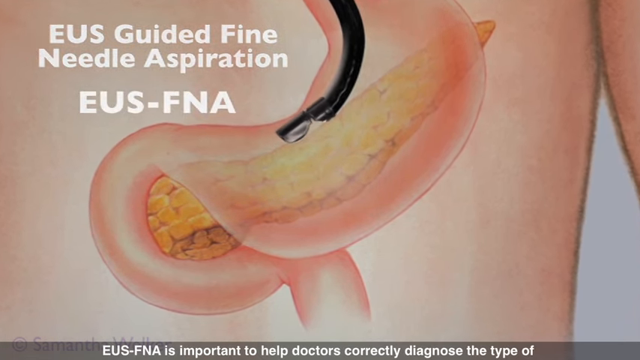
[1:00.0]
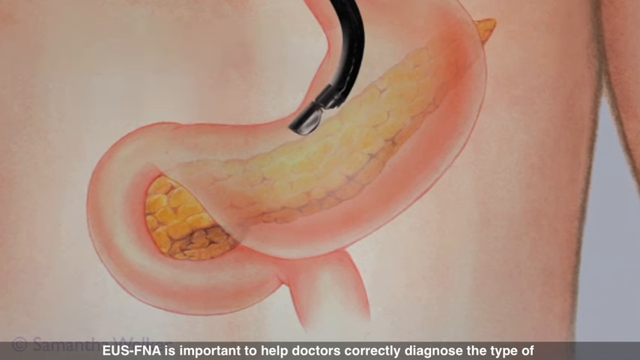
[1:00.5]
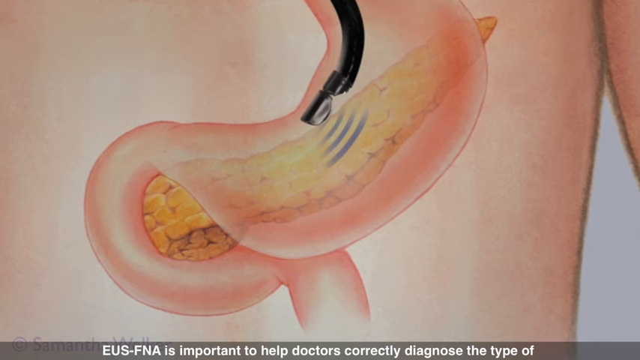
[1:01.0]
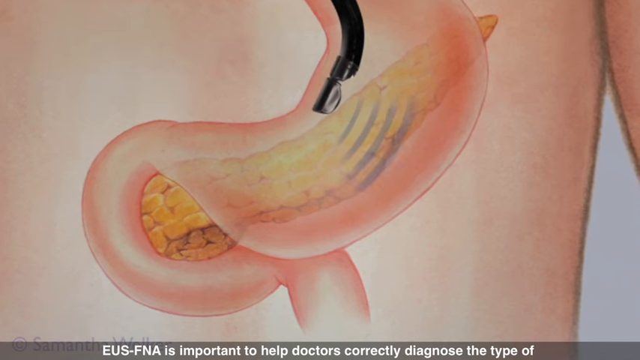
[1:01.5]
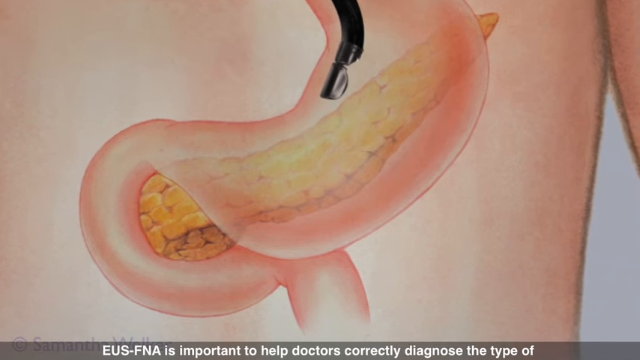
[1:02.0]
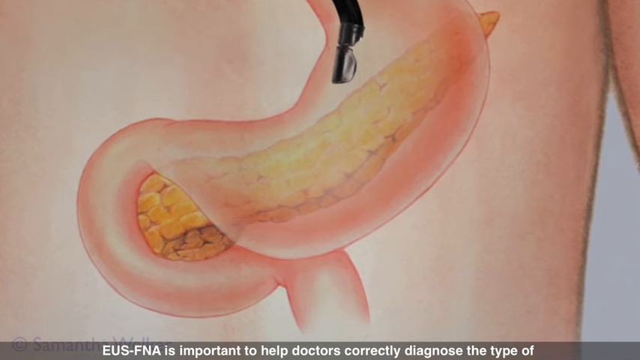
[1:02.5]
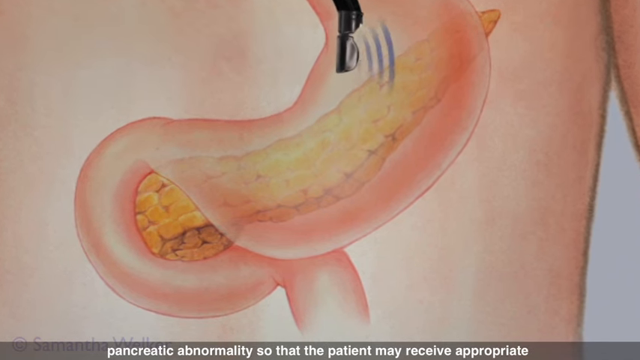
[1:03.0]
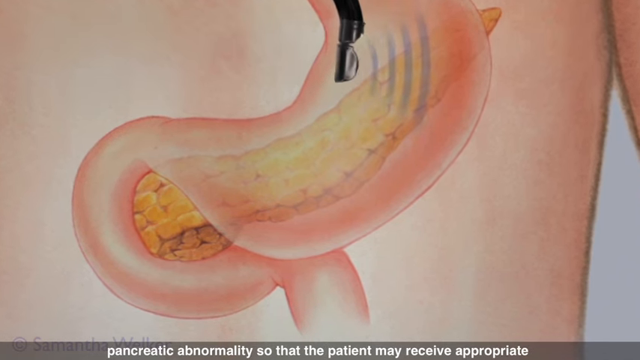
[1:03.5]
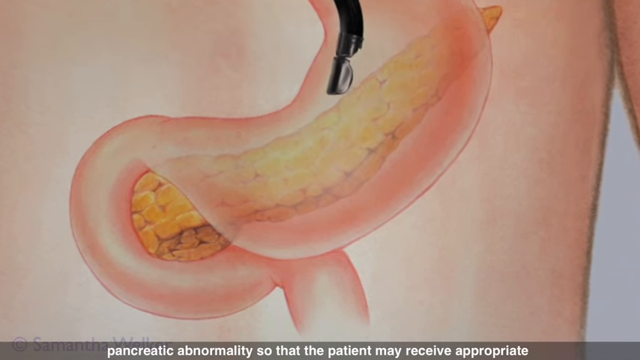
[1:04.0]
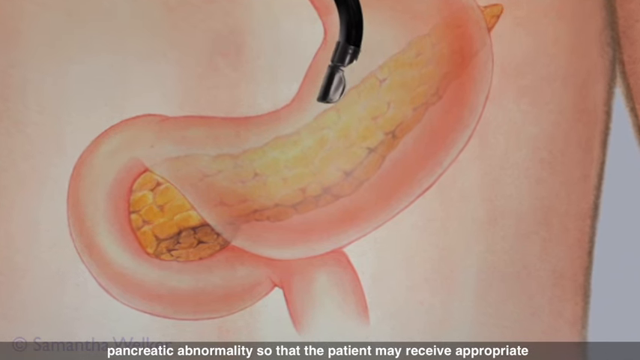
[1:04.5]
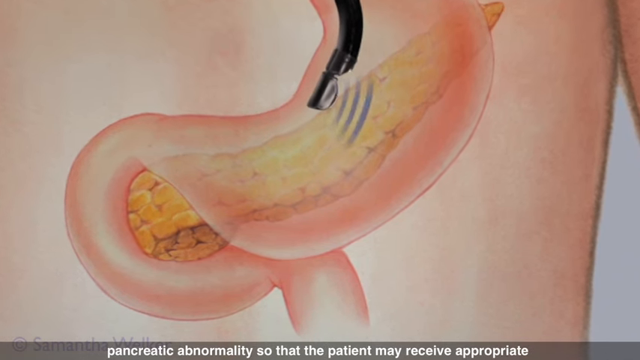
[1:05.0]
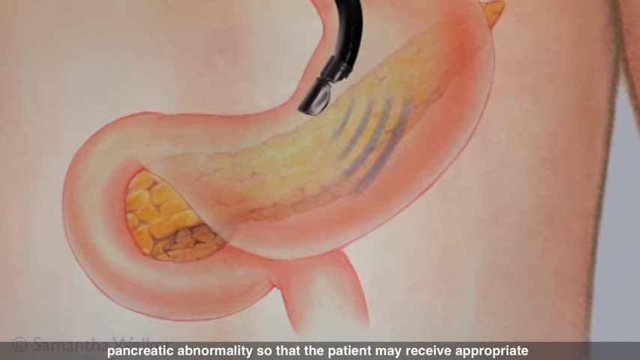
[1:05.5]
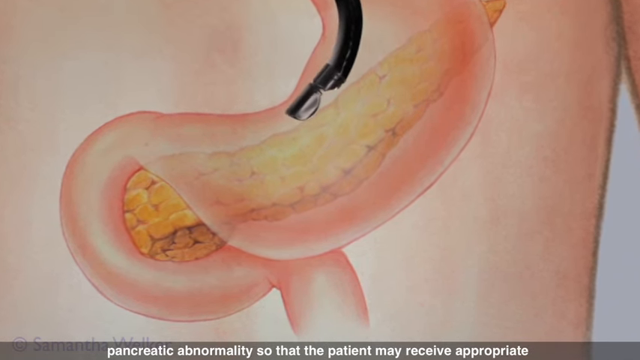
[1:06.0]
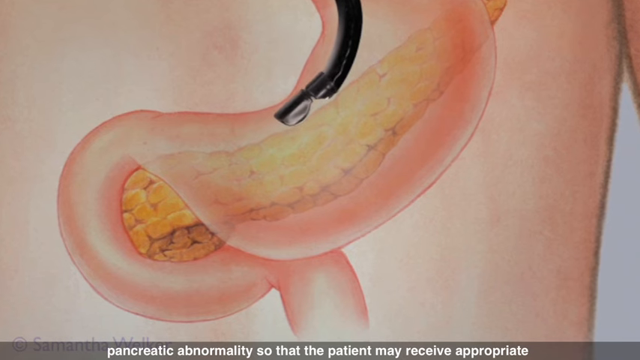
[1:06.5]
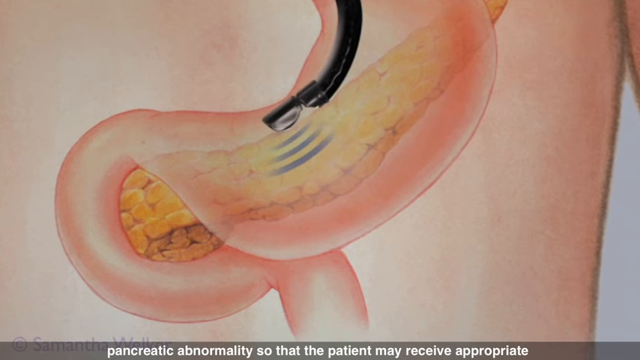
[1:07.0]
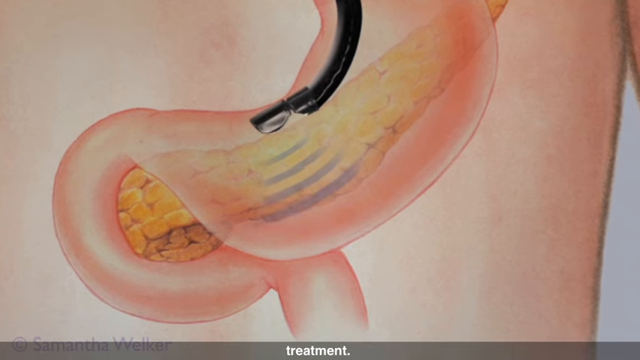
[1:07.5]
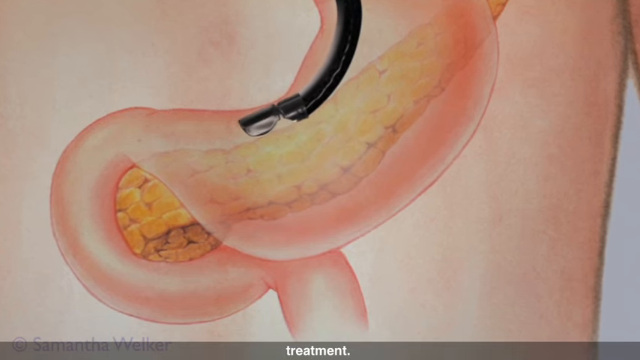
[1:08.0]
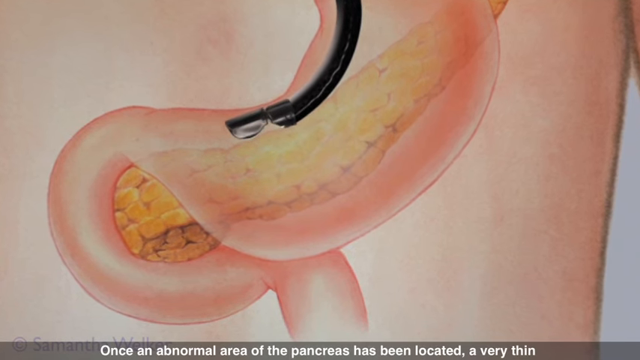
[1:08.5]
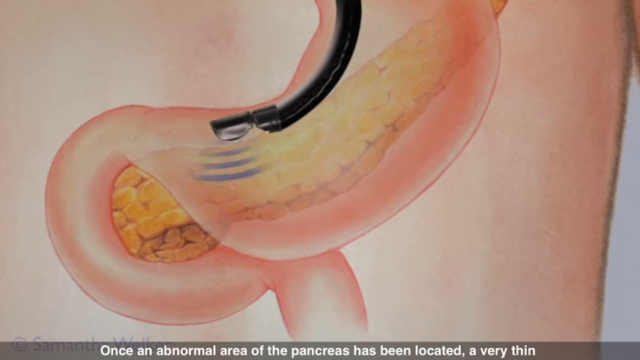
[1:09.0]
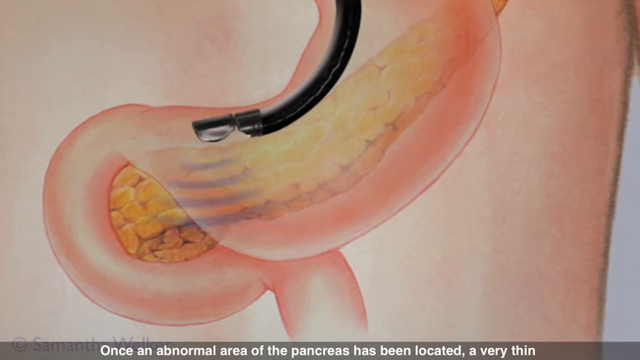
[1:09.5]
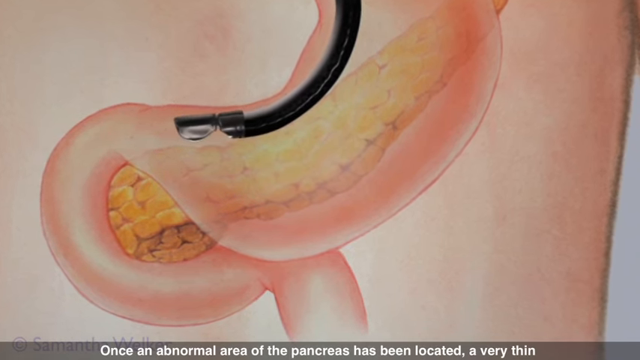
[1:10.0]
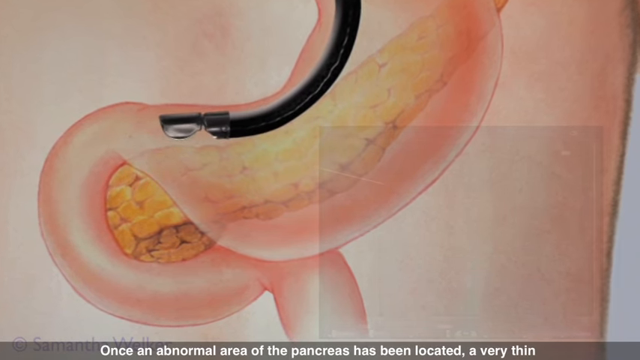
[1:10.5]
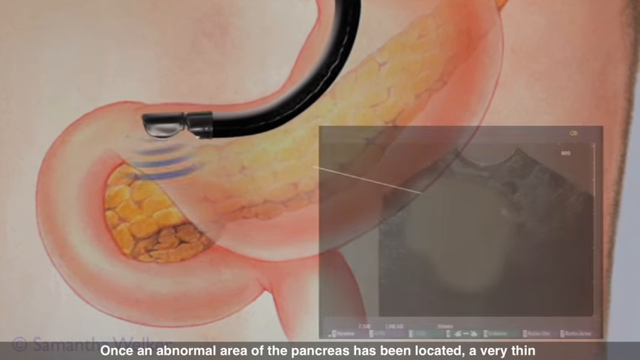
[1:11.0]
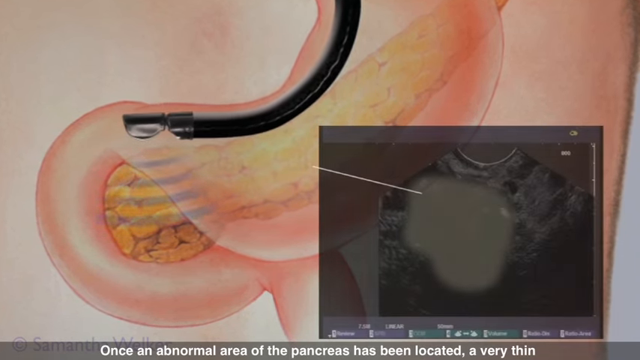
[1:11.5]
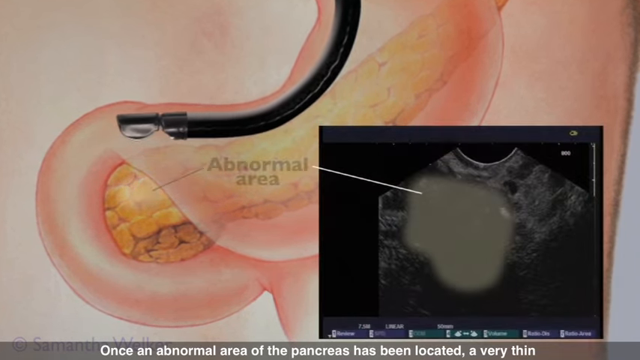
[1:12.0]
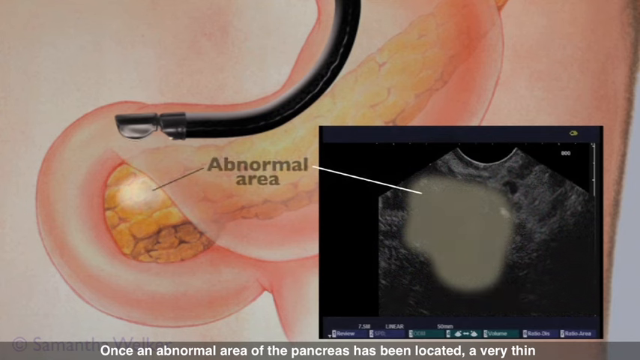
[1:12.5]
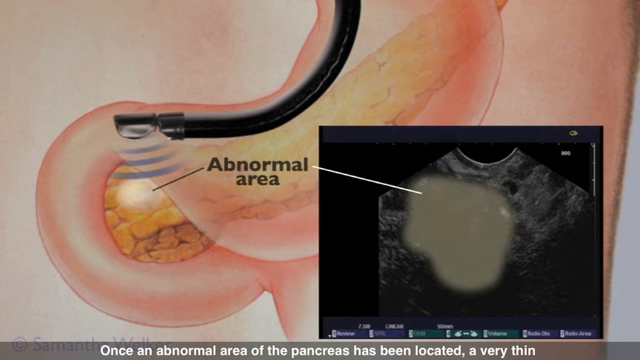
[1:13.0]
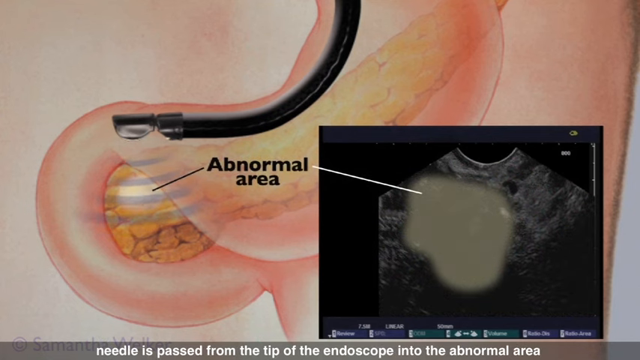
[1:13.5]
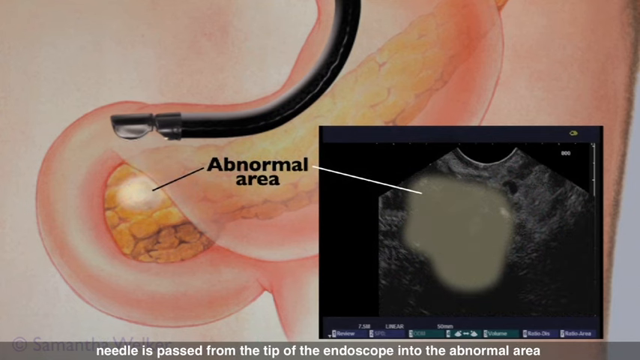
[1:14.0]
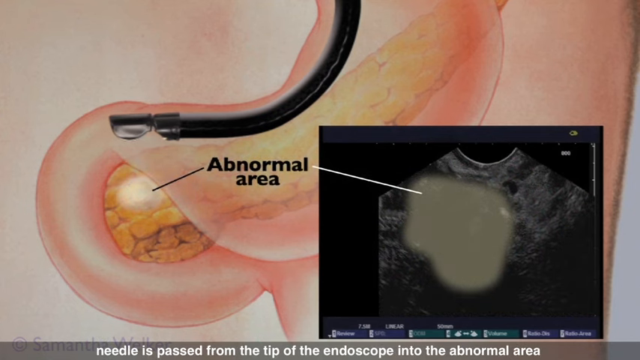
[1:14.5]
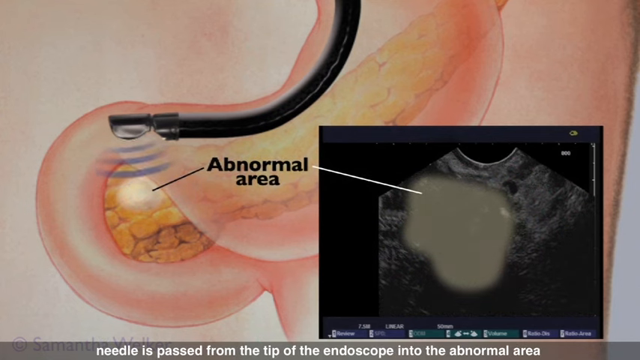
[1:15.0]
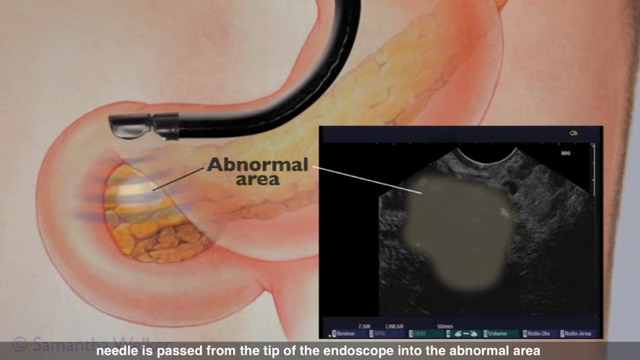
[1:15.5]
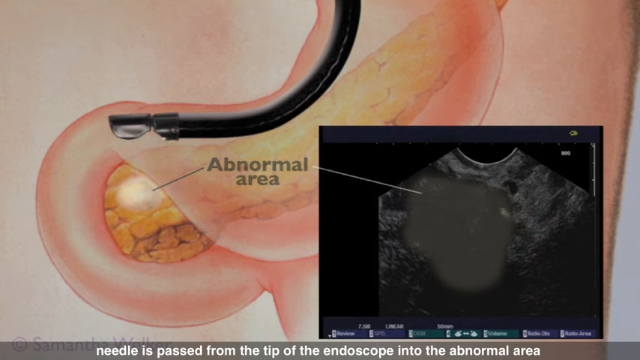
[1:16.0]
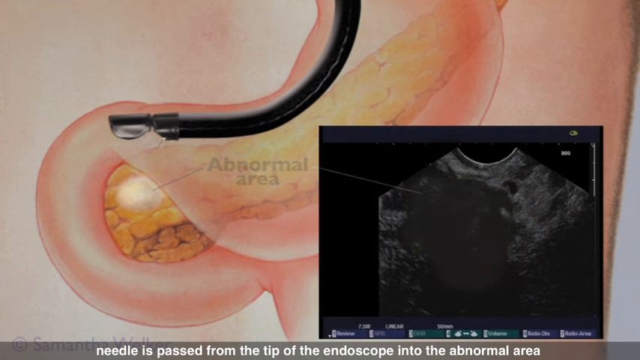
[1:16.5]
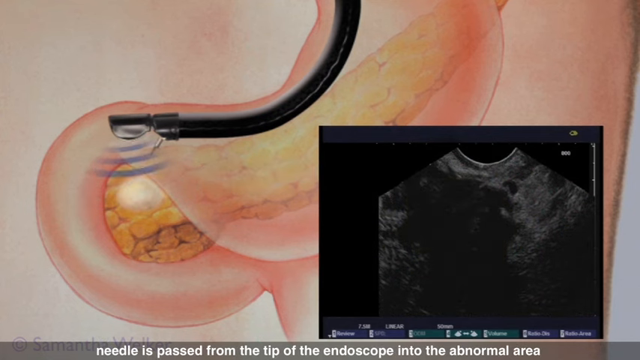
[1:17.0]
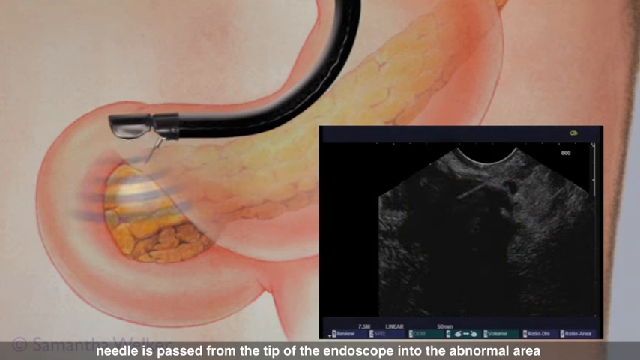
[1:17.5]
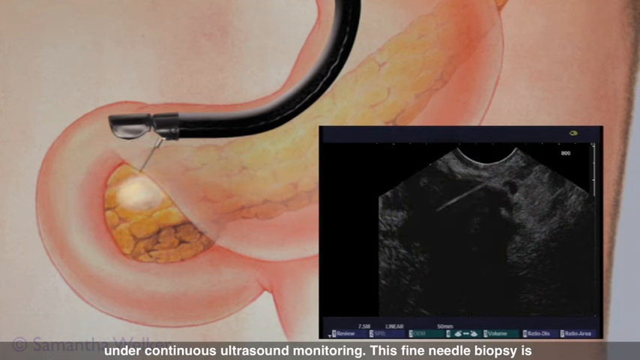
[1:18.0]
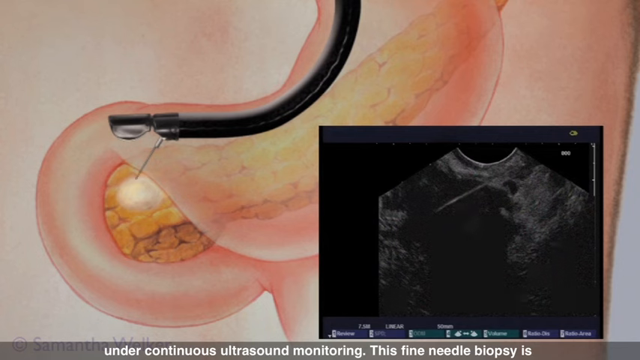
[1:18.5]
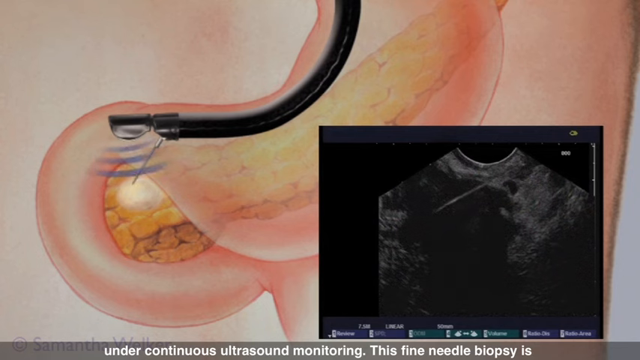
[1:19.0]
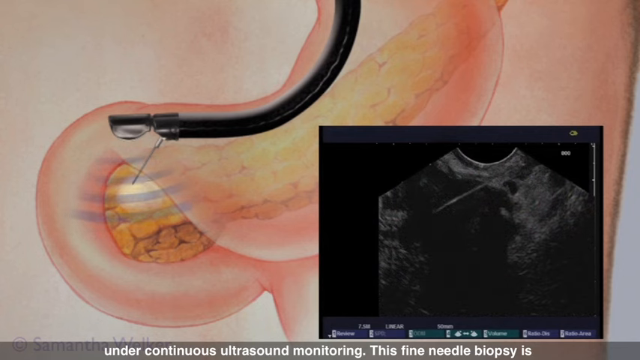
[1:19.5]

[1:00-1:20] The words "EUS, Guided Fine Needle Aspiration, EUS-FNA" are written in the upper left portion of the frame. The close-up of the man's chest and torso continues, with the camera panned in closer on the digestive tract near the stomach. The pancreas is shown in yellow, made up of many yellow ovals, more rounded on one end and pointed on the other. The ultrasound probe in the digestive tract emits blue lines representing ultrasound waves, which move away from the probe. The probe retracts up and out of the digestive tract while still emitting the waves.